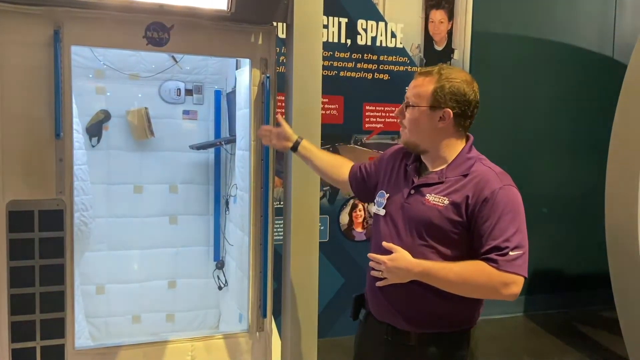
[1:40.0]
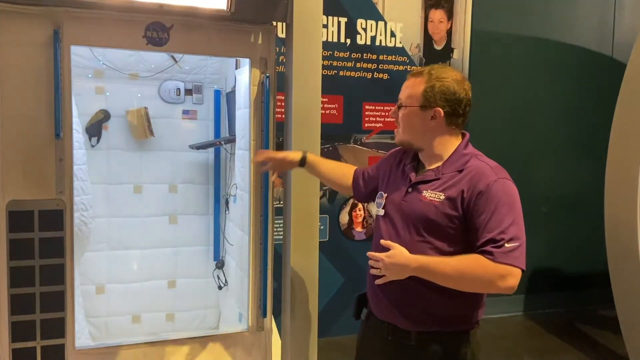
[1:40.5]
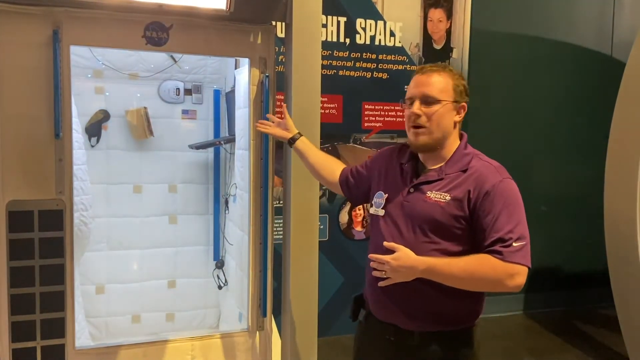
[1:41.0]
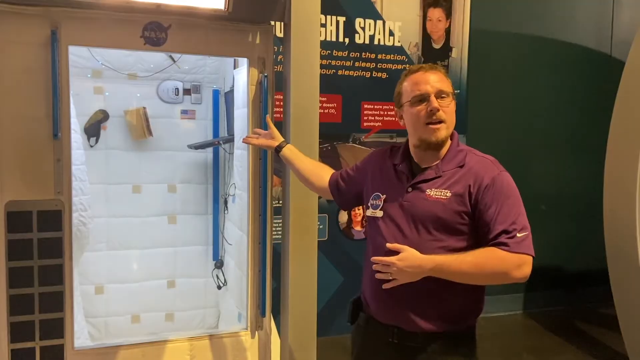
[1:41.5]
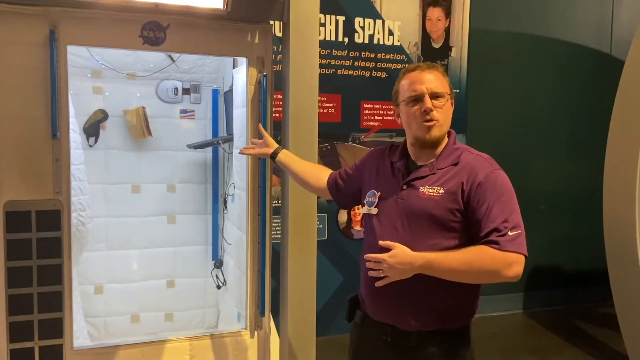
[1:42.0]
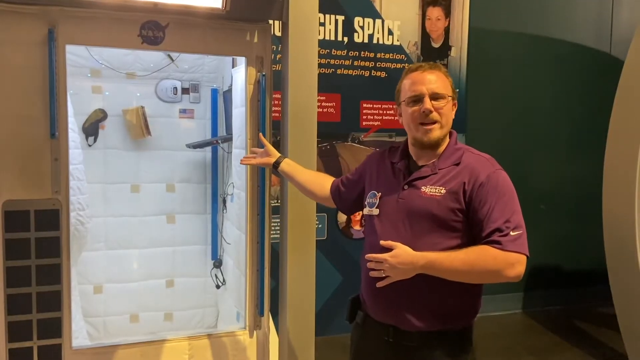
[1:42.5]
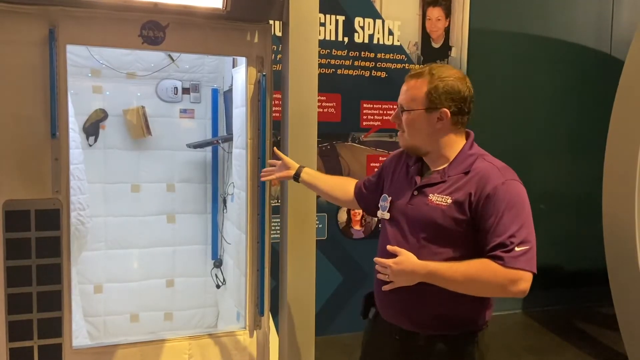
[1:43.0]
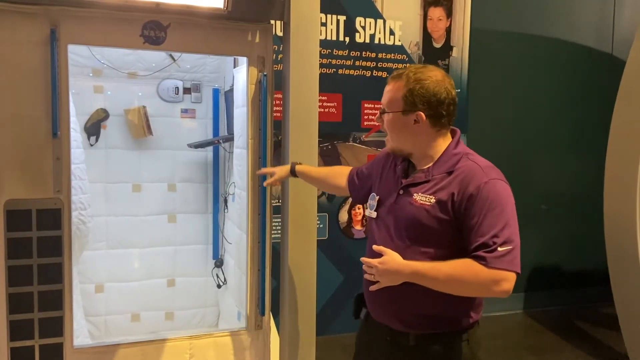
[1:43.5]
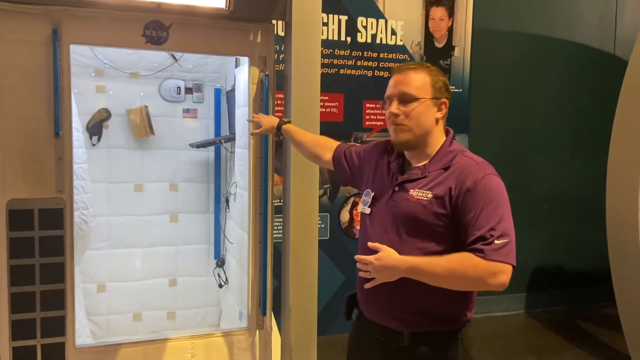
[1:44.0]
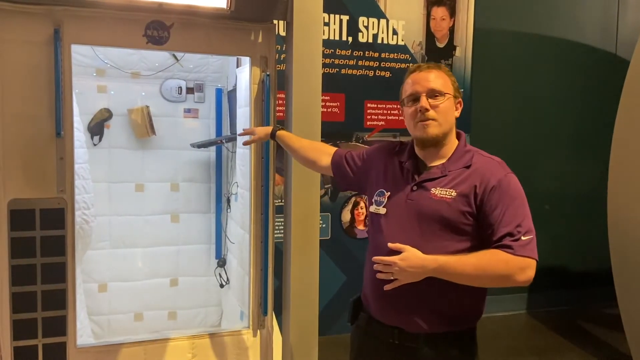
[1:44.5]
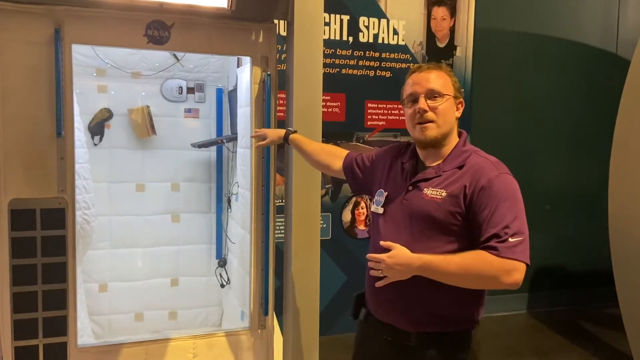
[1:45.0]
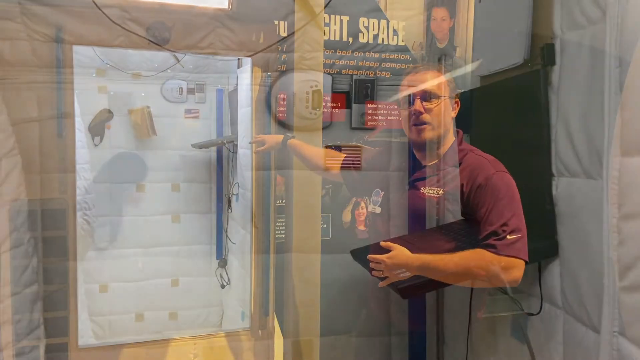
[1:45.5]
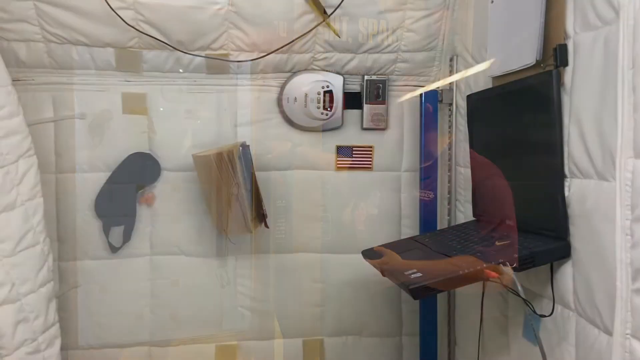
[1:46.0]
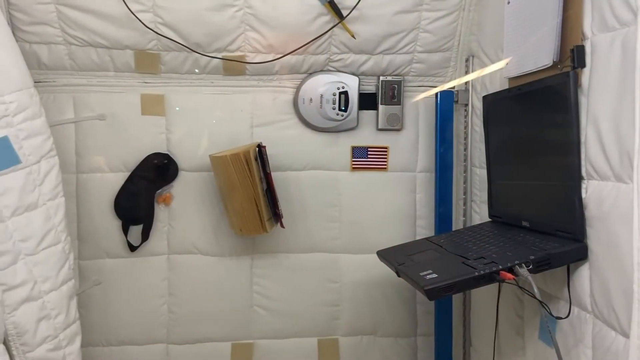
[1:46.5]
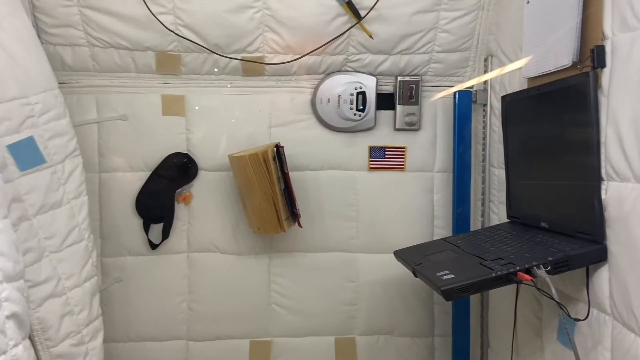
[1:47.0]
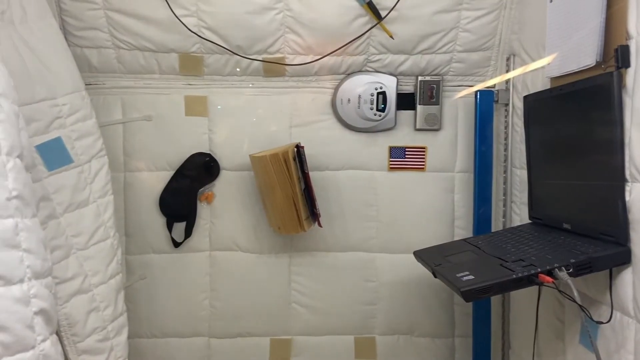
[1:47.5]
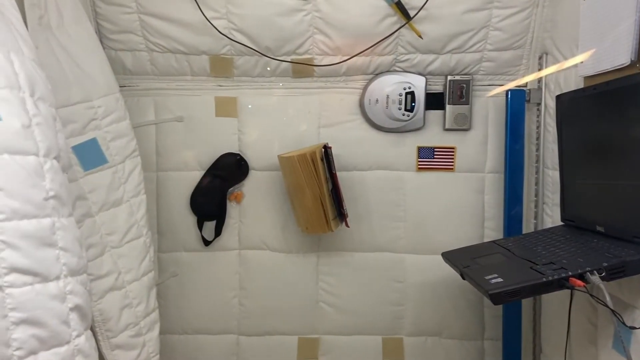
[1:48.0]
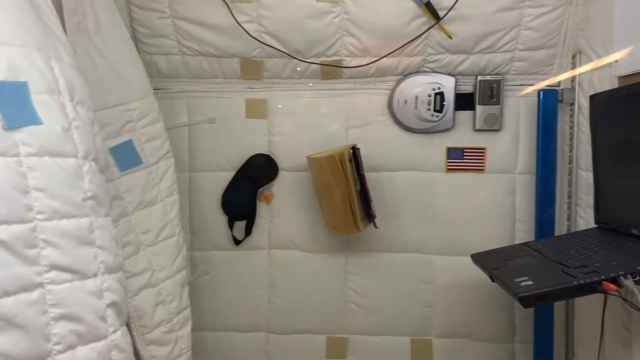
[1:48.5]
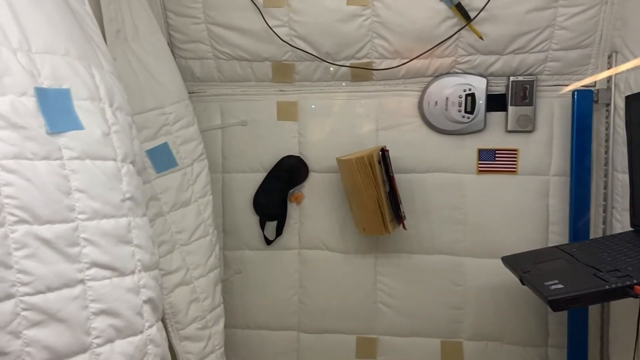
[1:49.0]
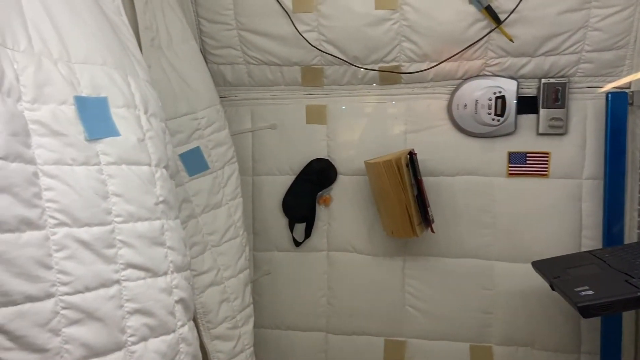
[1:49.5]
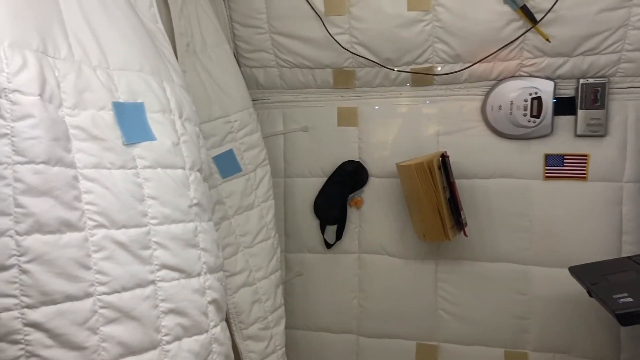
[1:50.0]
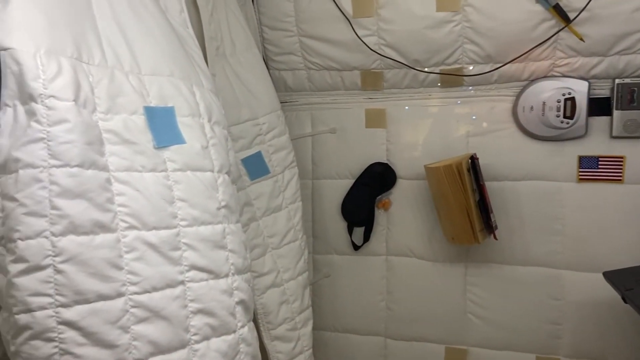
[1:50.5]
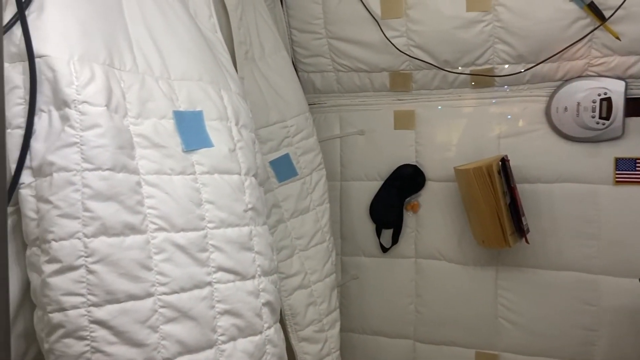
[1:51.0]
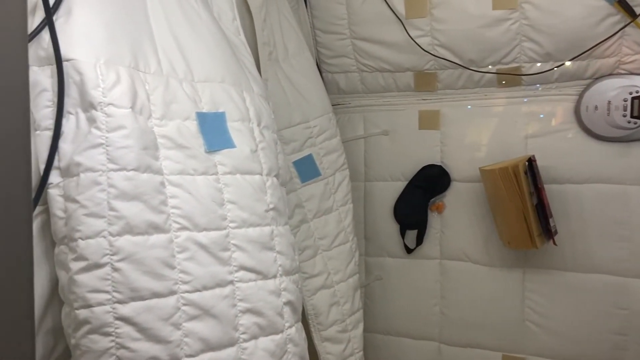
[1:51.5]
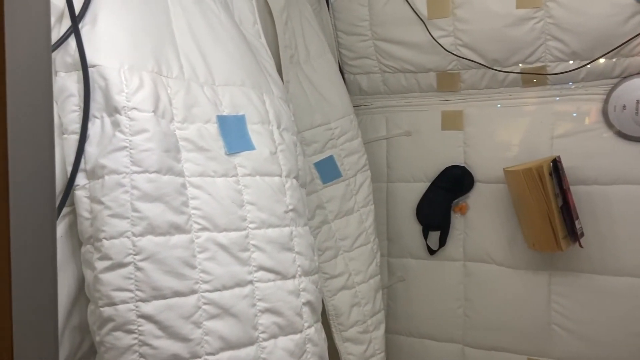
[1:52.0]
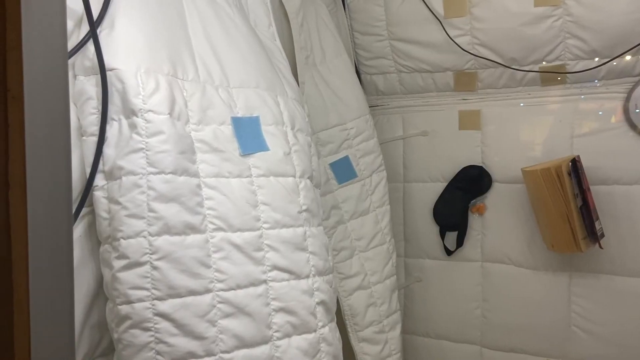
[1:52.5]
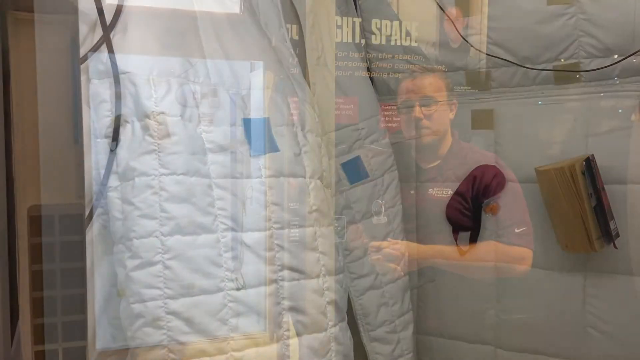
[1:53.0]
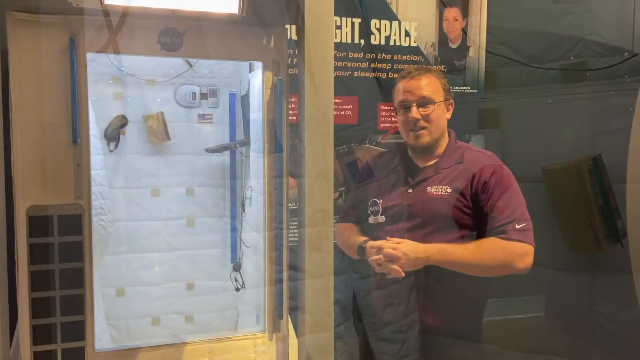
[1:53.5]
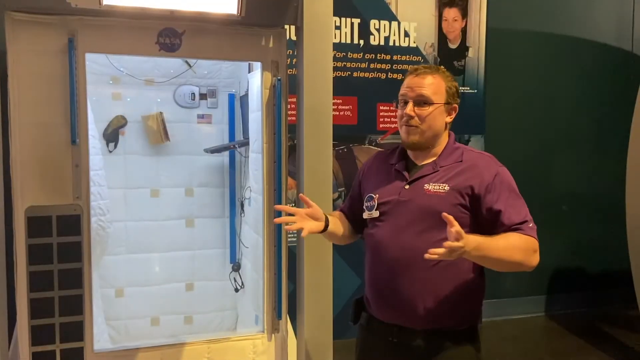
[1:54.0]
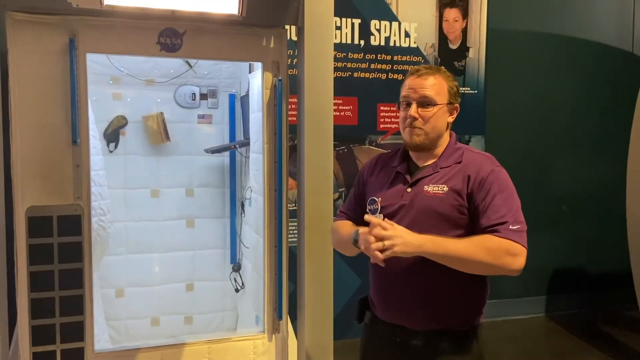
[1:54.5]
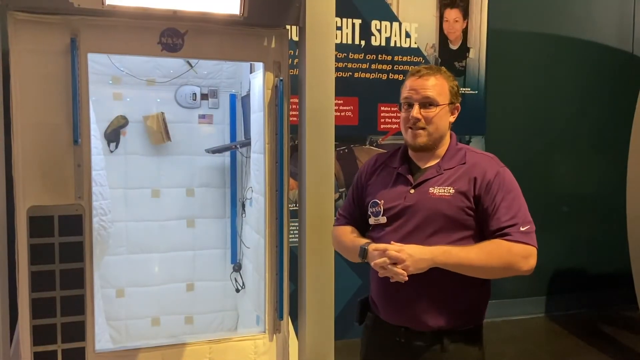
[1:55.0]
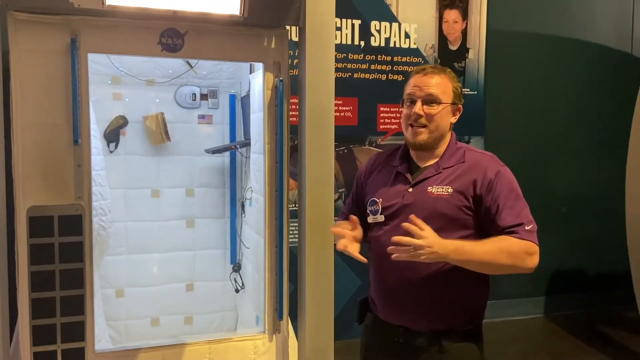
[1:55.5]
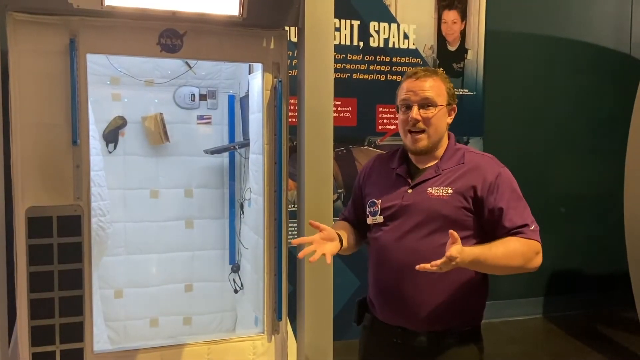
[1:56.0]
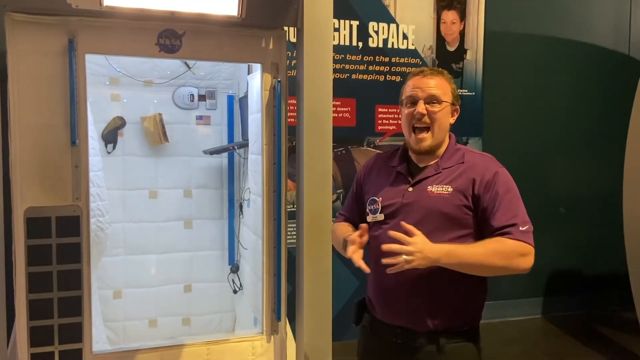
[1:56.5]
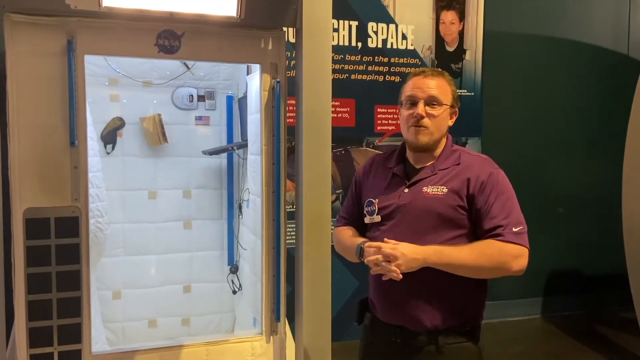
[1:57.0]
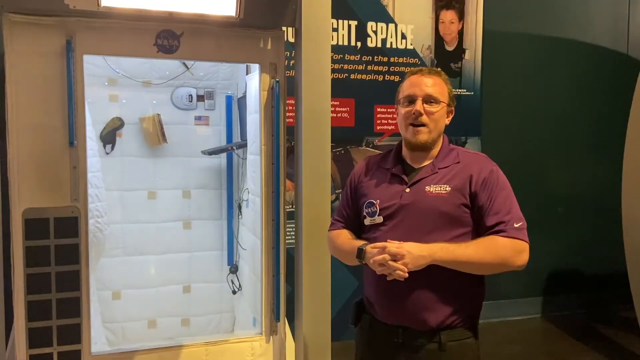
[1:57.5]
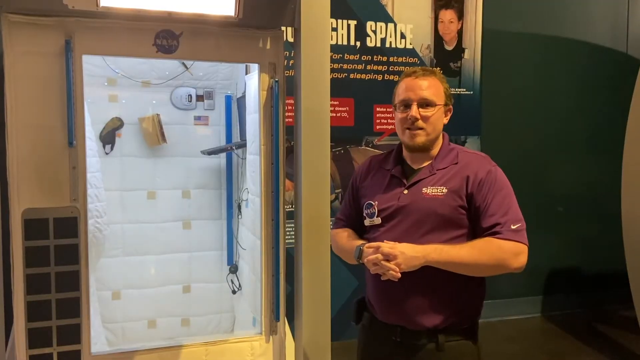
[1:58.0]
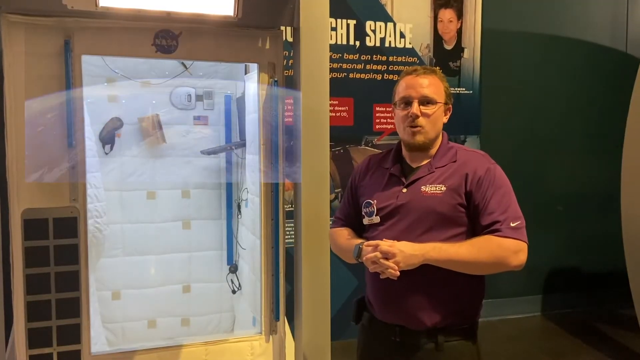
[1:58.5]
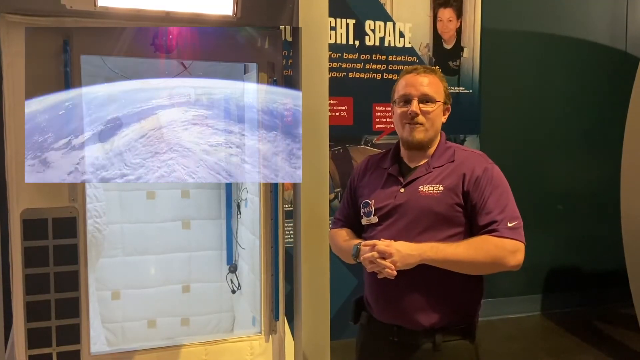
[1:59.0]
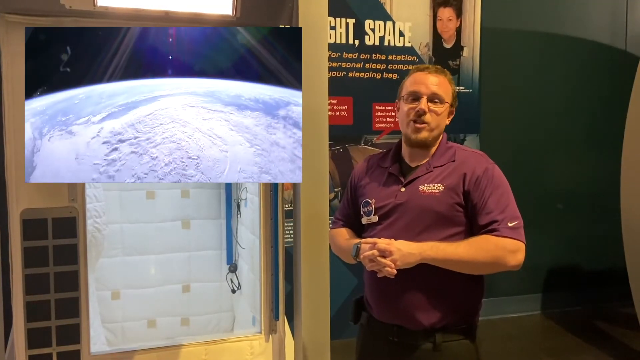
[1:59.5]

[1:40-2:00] The man stands right next to the refrigerator, which appears to have a very long blue handle on its right side. The view then moves into the refrigerator-type area for a closer look. The second item looks like some sort of roll, and the first item looks like a face mask. On the left are some sort of cushions or very thick-looking beds, and sleeping accessories appear to be hanging there.